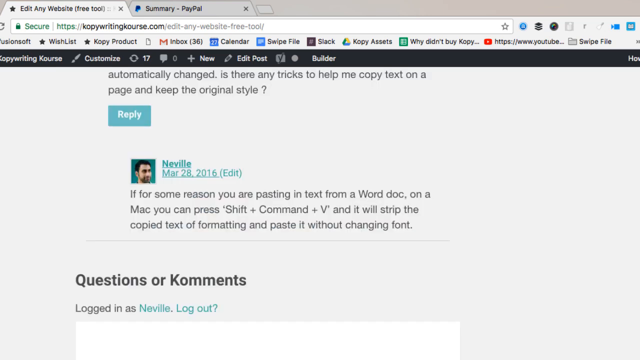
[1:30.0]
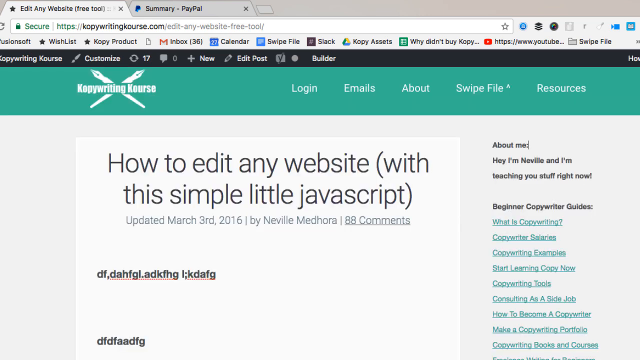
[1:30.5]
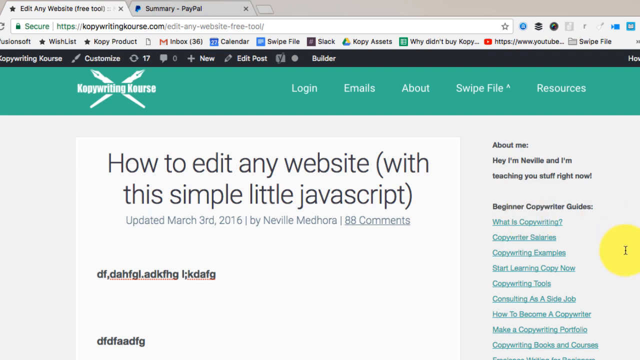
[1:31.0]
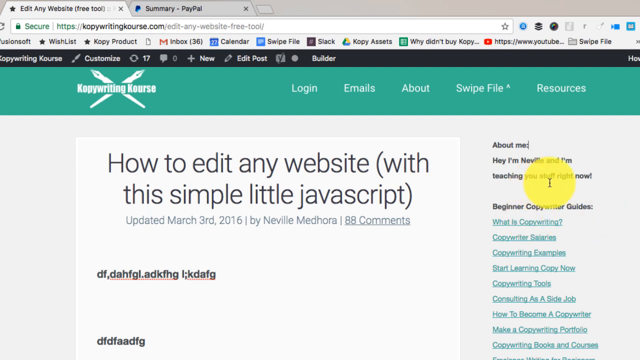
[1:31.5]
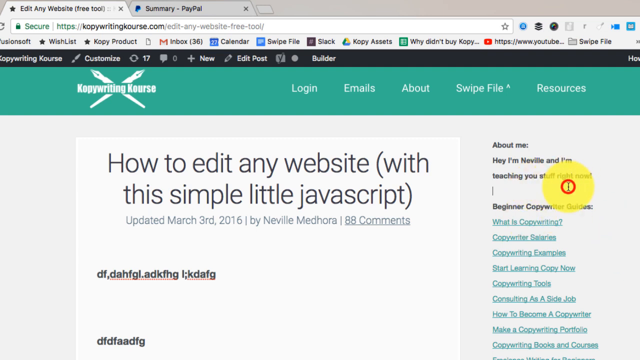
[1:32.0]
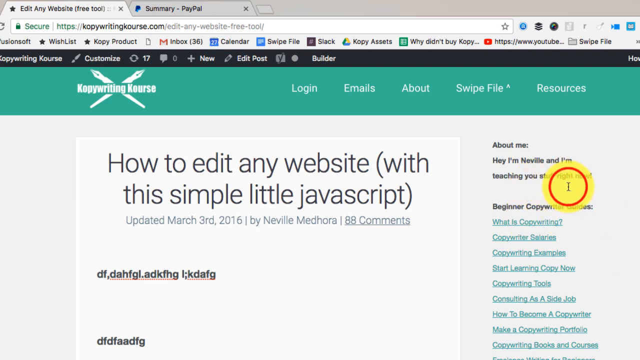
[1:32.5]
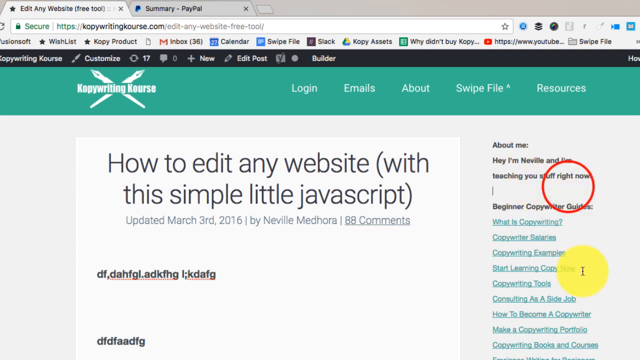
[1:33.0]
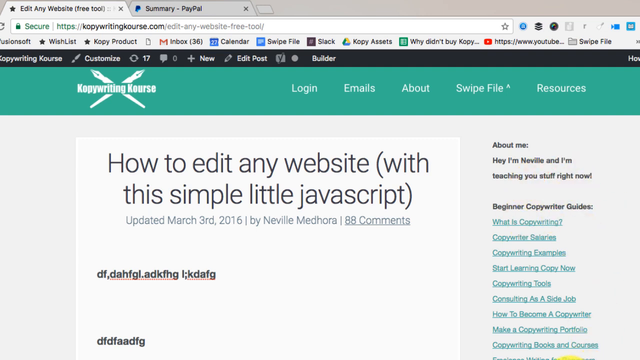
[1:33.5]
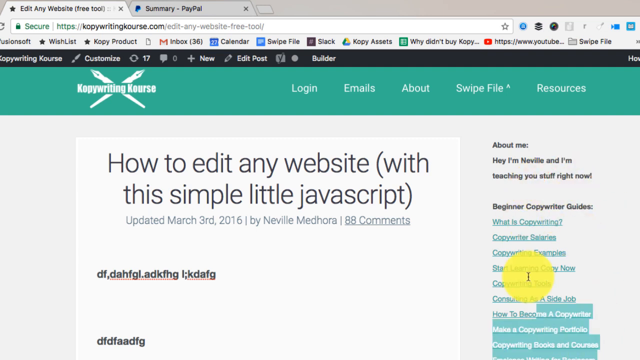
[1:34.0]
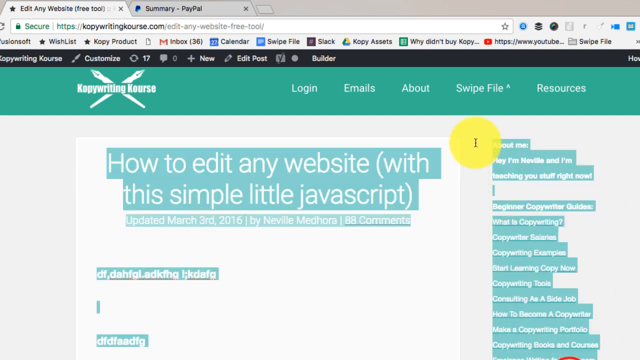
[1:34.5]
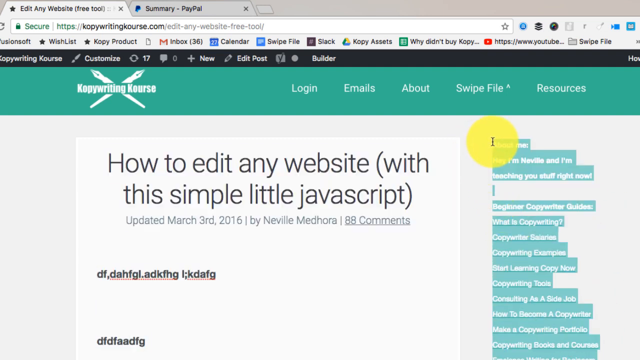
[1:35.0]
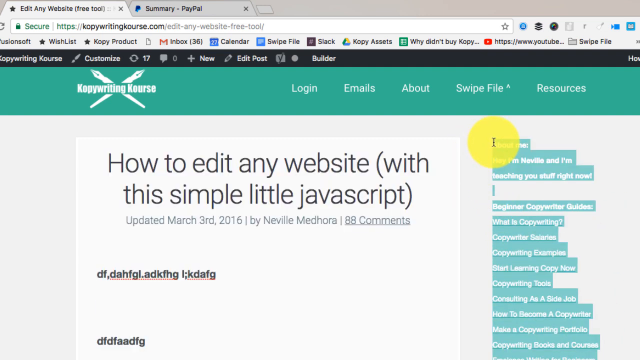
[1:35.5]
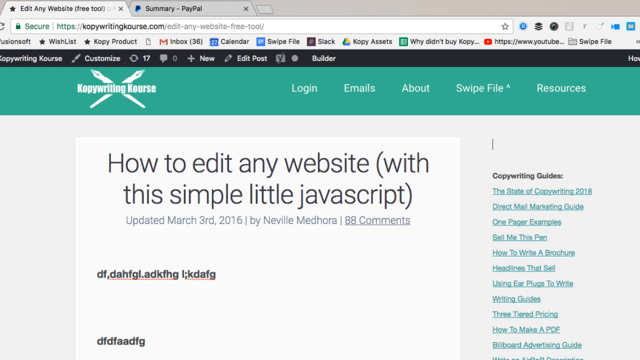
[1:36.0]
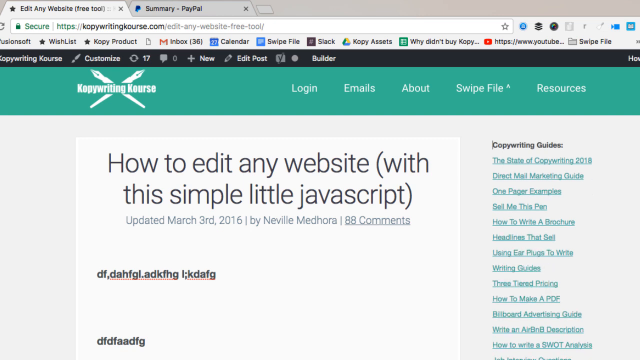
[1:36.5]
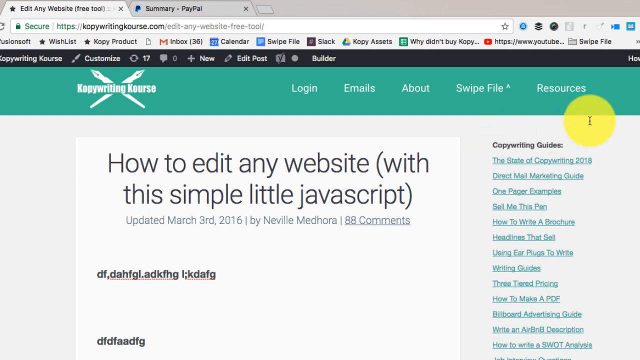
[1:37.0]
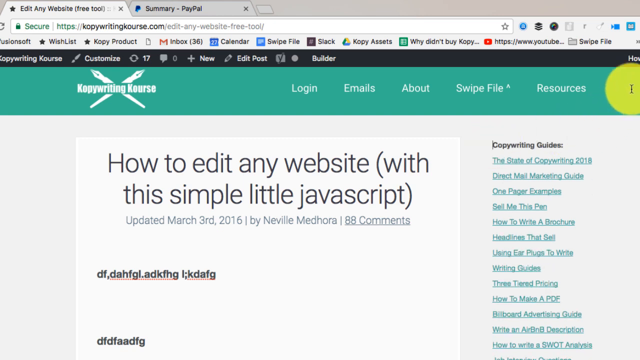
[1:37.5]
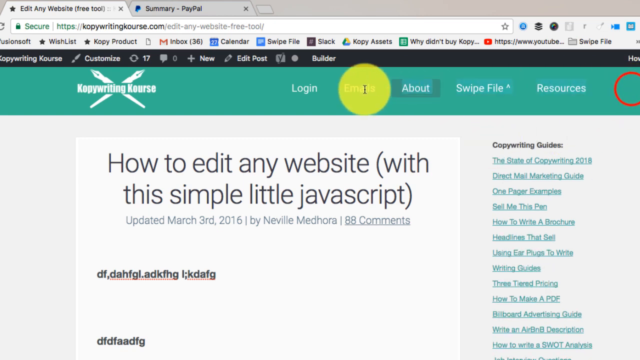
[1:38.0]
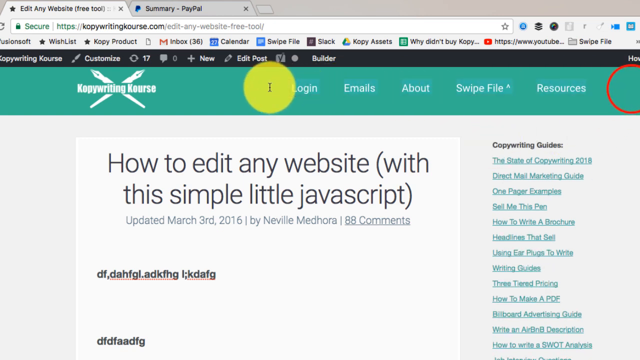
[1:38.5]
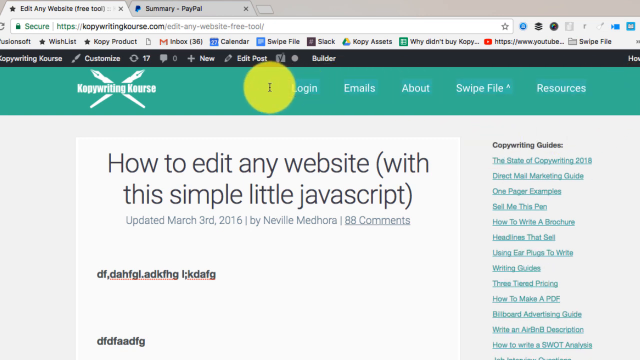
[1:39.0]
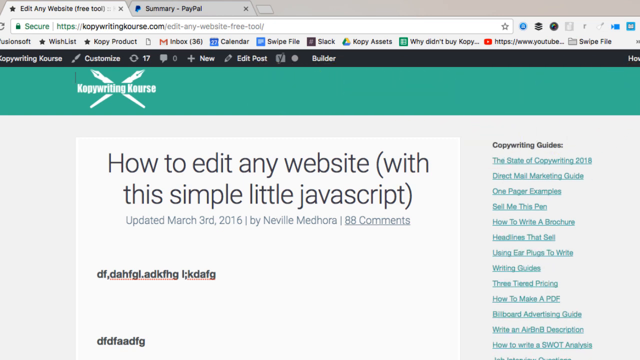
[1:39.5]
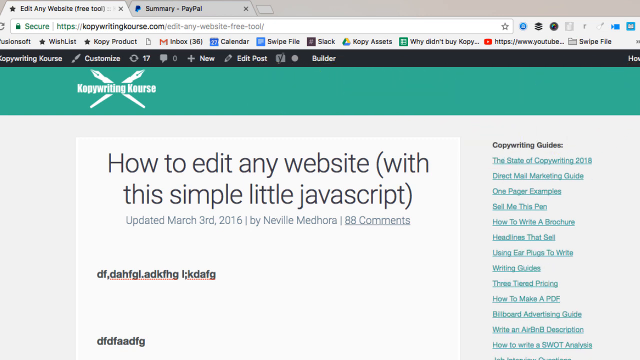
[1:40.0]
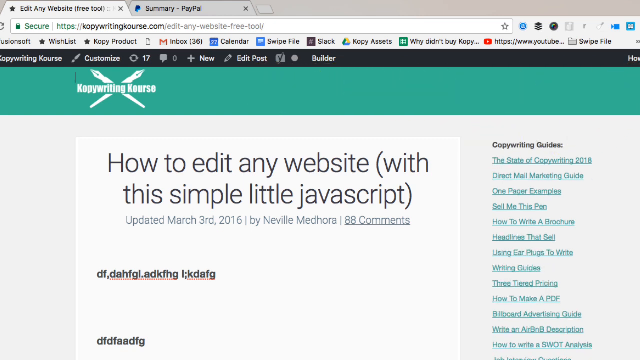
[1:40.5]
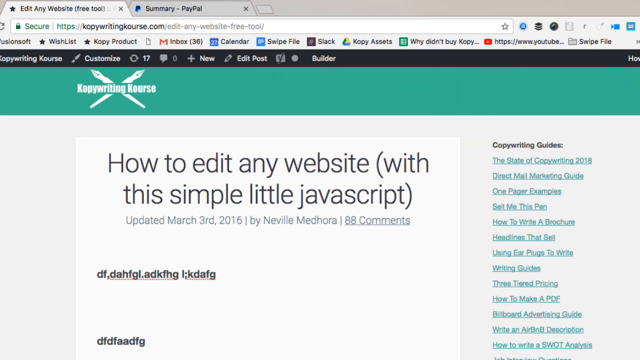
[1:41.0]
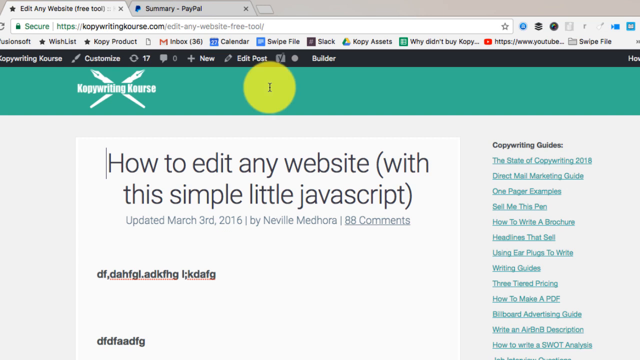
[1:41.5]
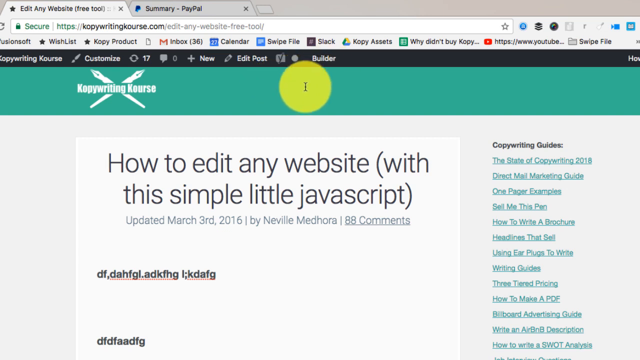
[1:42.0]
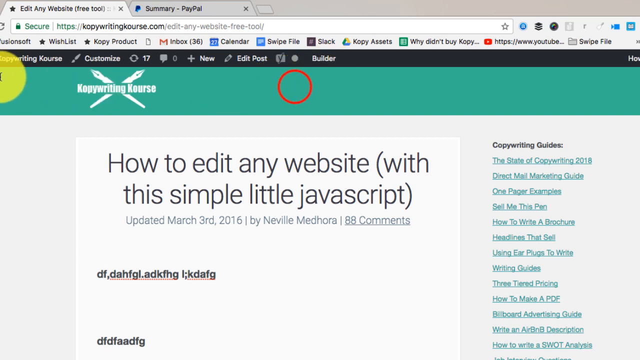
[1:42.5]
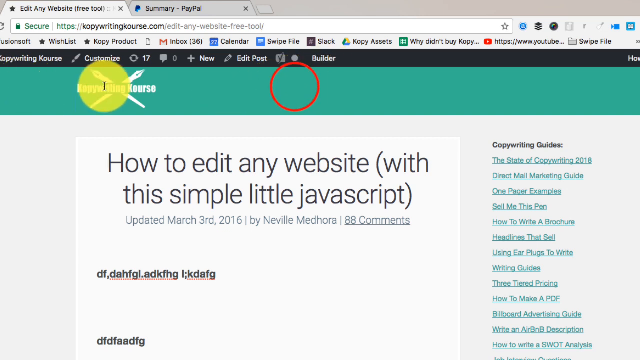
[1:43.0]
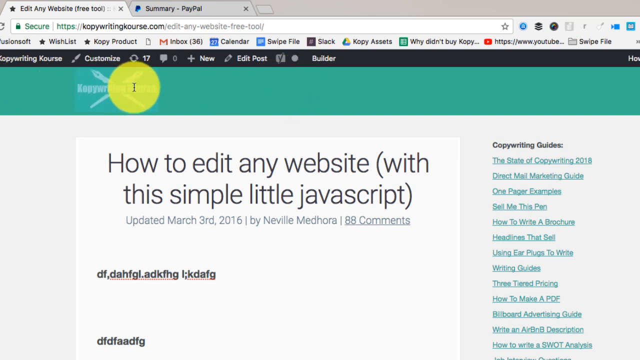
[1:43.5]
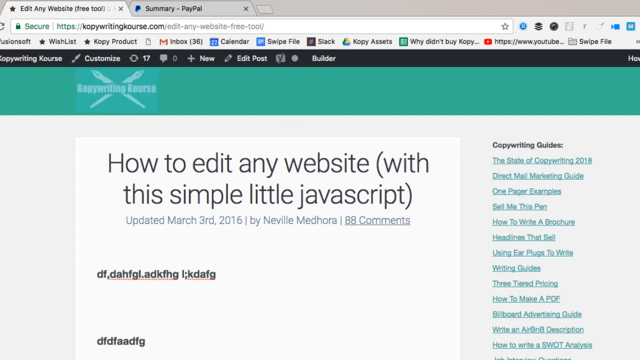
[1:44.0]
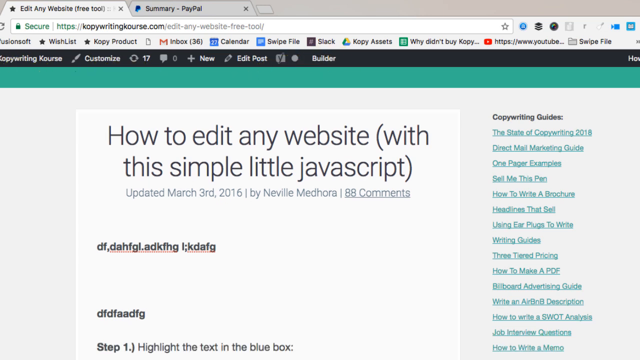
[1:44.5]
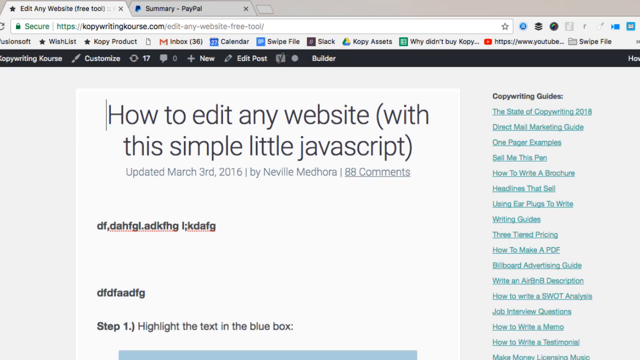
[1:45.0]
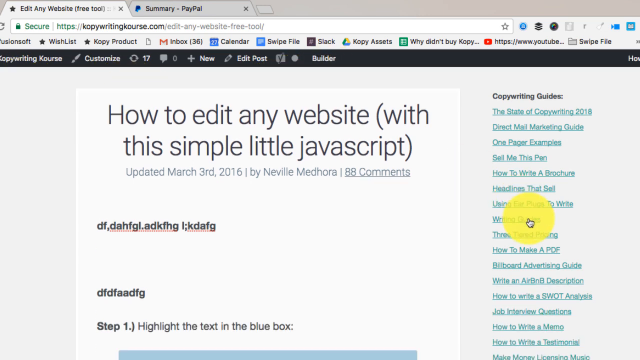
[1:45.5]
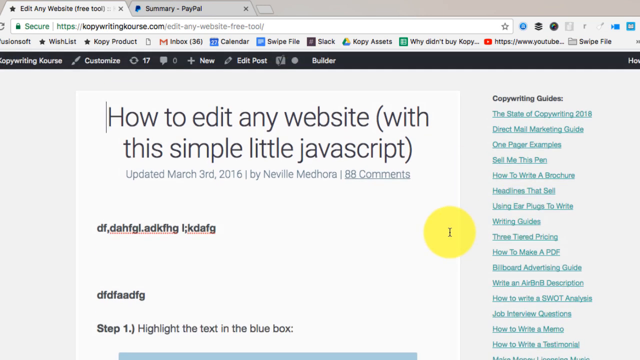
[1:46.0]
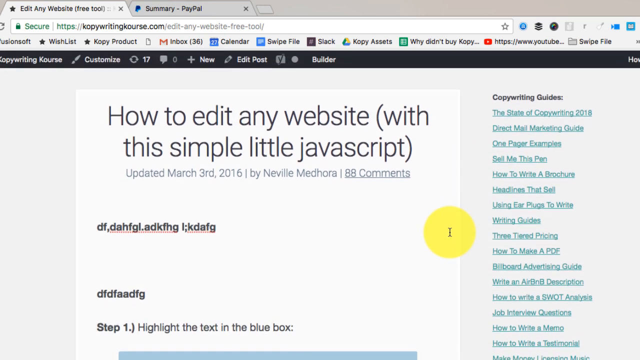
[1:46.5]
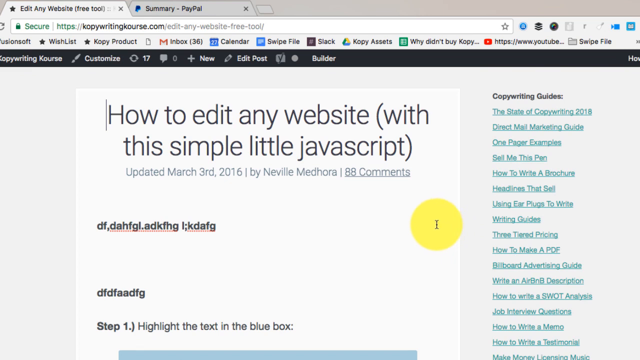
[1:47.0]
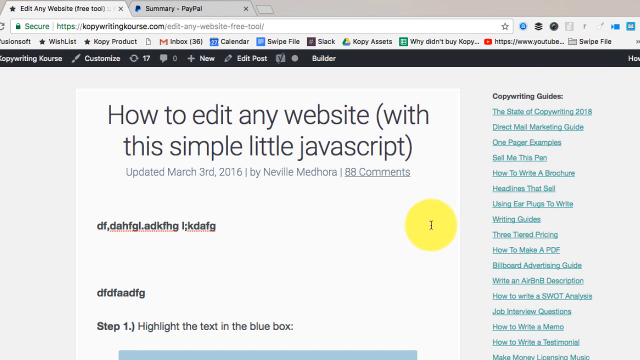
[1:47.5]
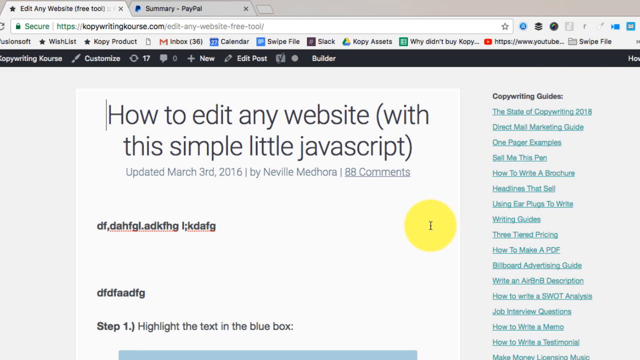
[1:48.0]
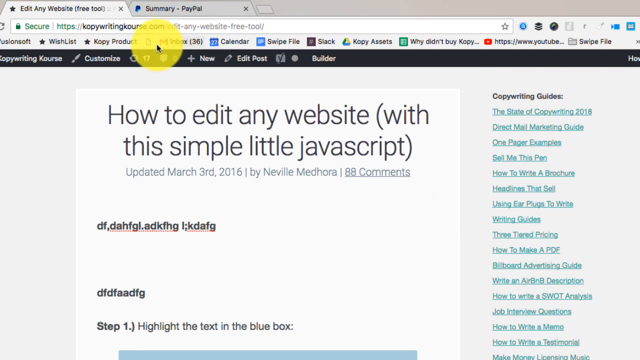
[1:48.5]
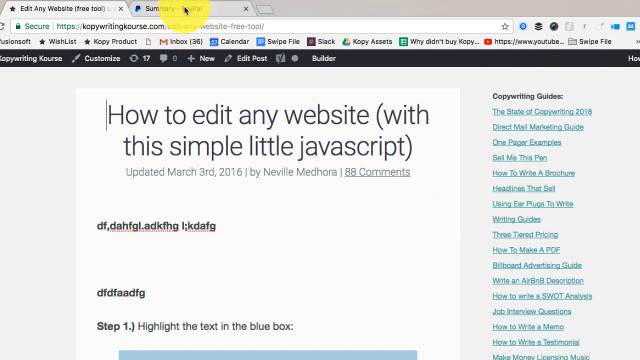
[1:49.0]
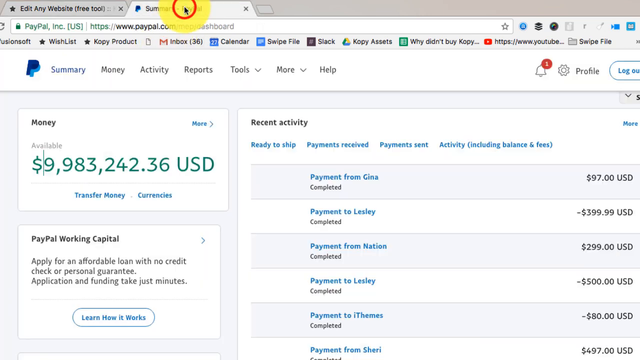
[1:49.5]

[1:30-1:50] Someone is editing a web page on the Kopywriting Kourse site. On the right side, text from a beginner copywriter guide is highlighted, and as more text is highlighted, some of it disappears. The cursor moves over the navigation bar, and all of the elements in it disappear. The cursor then moves to the Kopywriting Kourse logo on the left of the navigation bar and removes the logo from the bar. The cursor then clicks on a PayPal tab open at the top of the screen, next to another tab that reads "Edit Any Website (free tool)." The PayPal page briefly appears, open to an account summary page showing a balance of $9,983,242.36. A red circle appears on the screen over the PayPal tab.